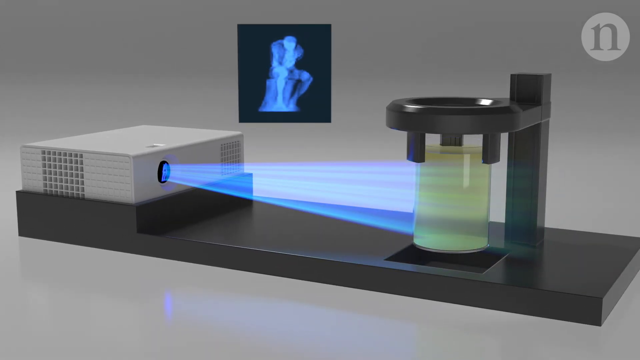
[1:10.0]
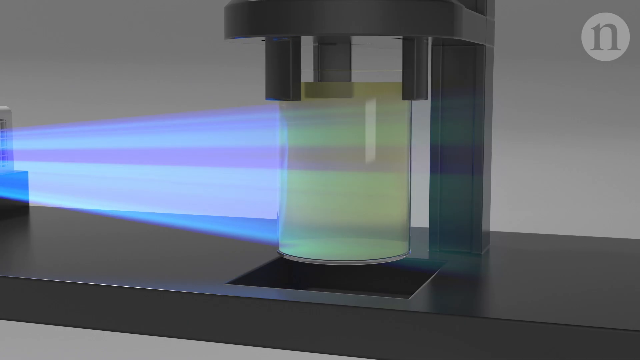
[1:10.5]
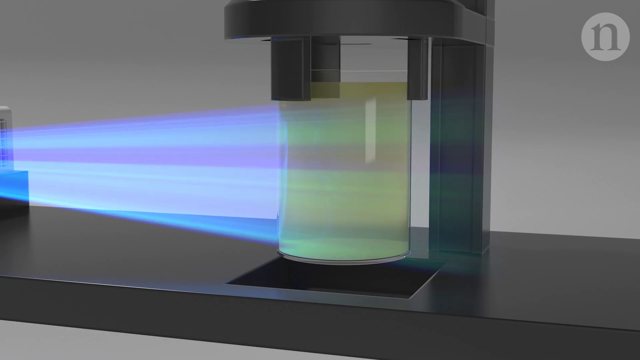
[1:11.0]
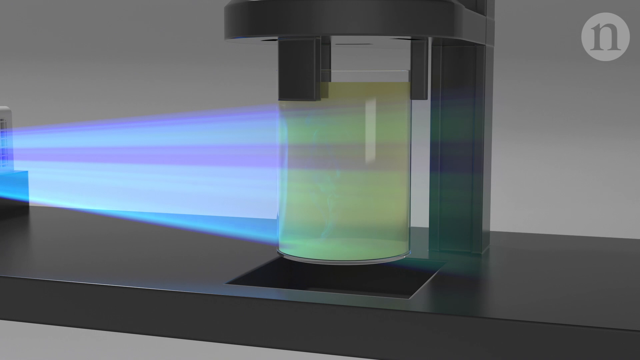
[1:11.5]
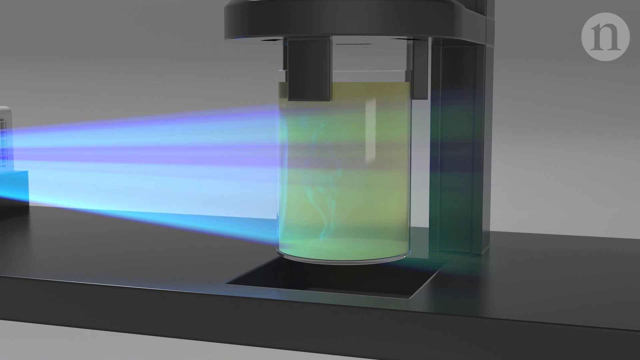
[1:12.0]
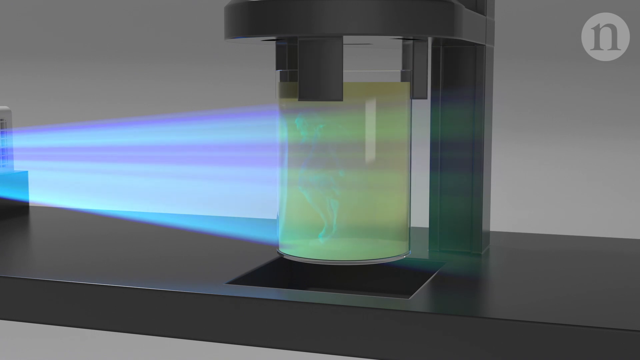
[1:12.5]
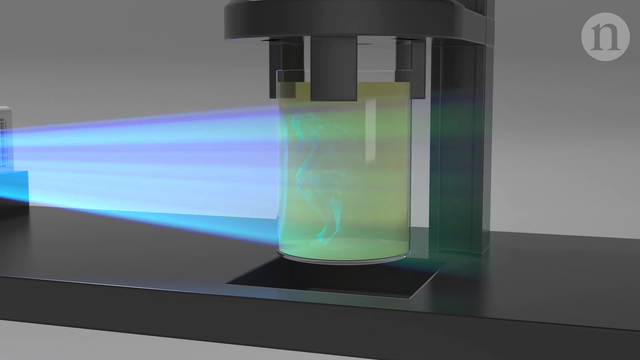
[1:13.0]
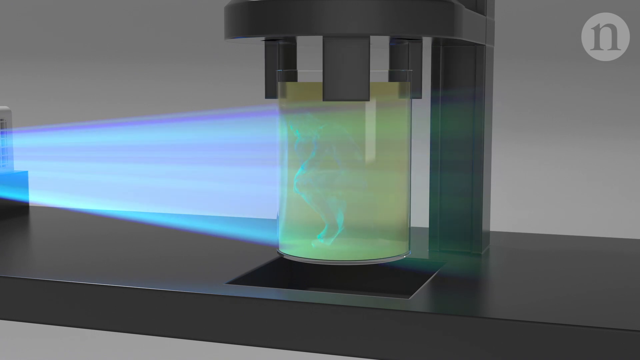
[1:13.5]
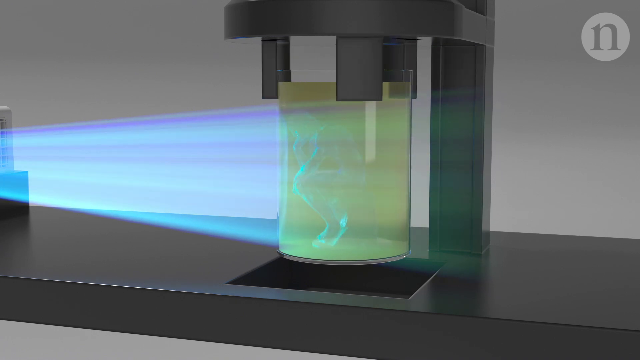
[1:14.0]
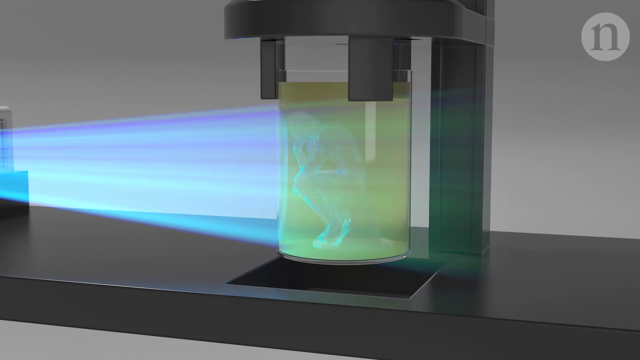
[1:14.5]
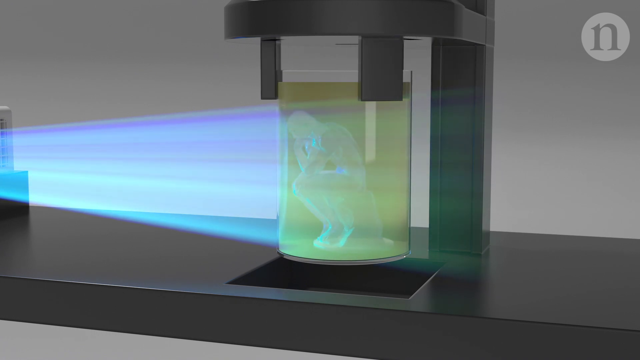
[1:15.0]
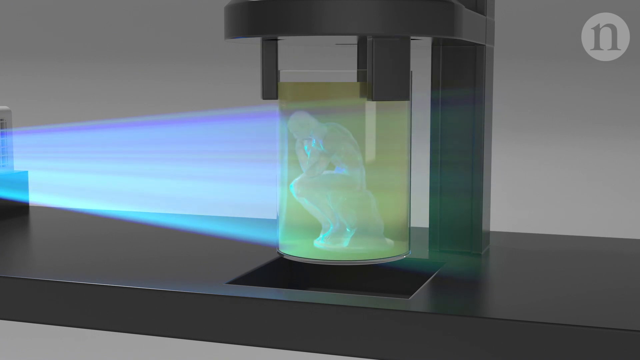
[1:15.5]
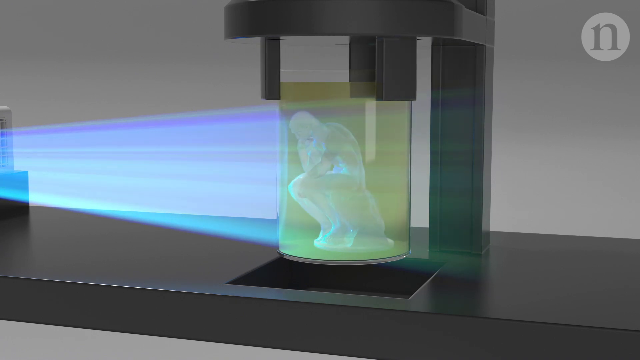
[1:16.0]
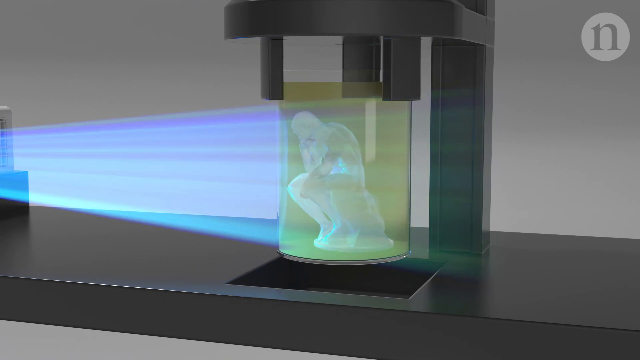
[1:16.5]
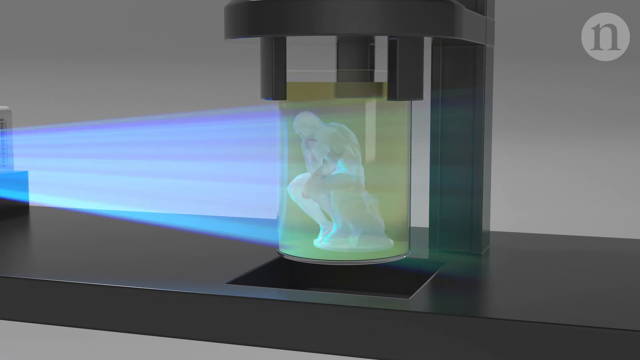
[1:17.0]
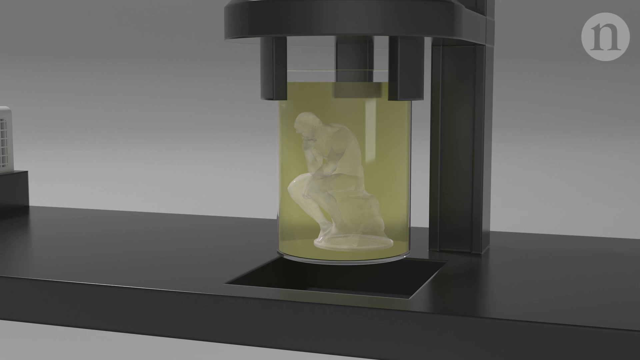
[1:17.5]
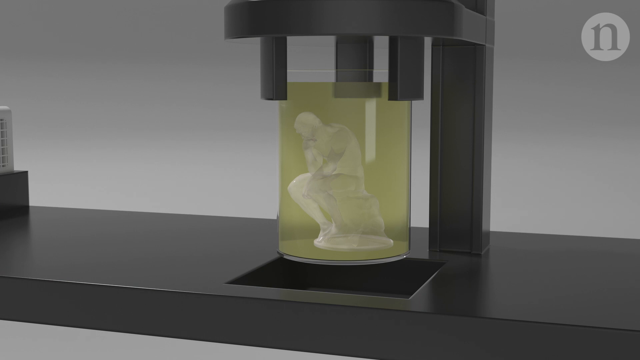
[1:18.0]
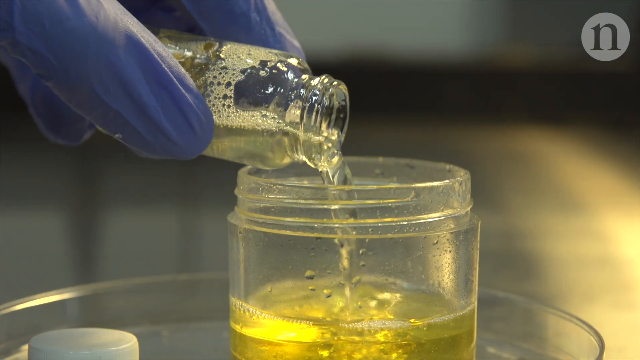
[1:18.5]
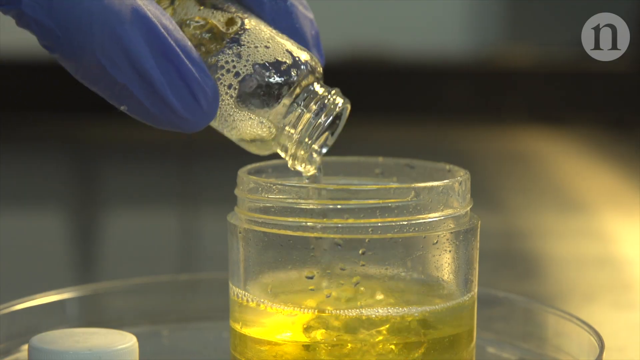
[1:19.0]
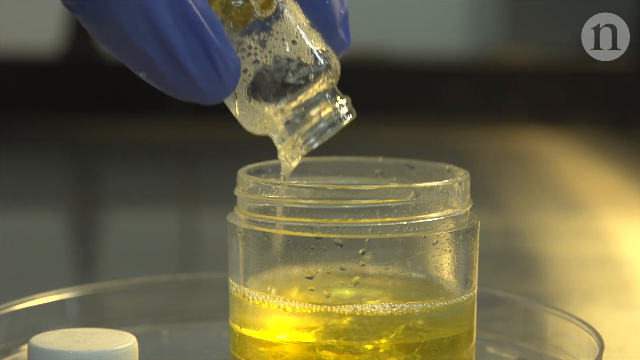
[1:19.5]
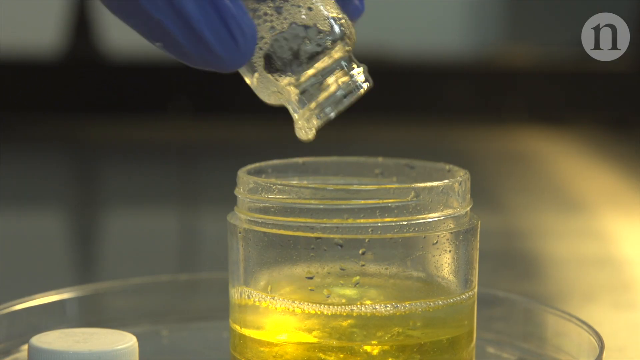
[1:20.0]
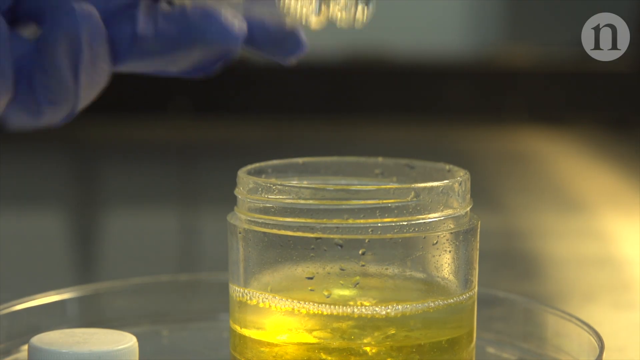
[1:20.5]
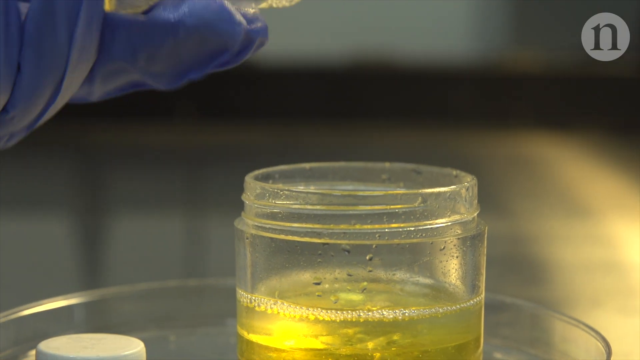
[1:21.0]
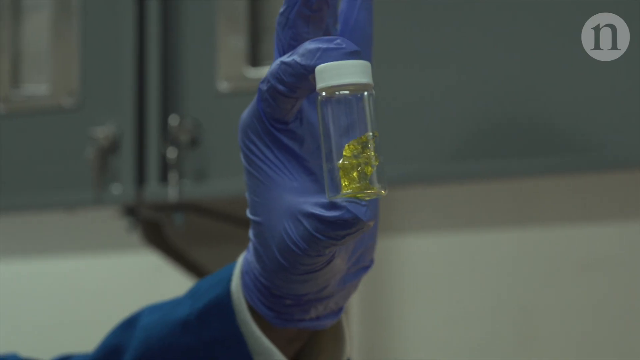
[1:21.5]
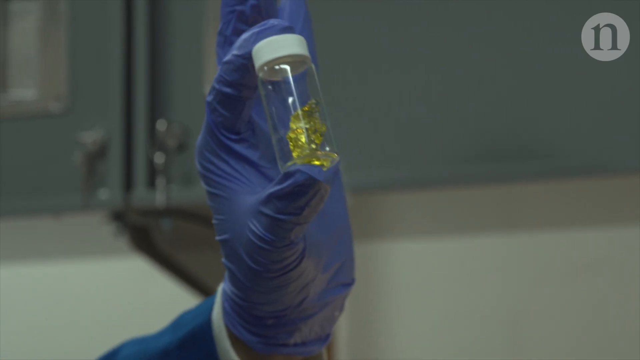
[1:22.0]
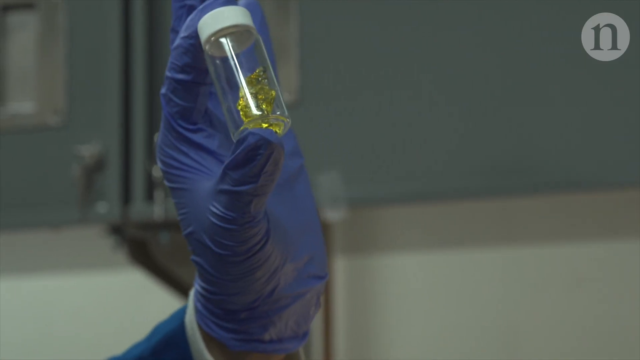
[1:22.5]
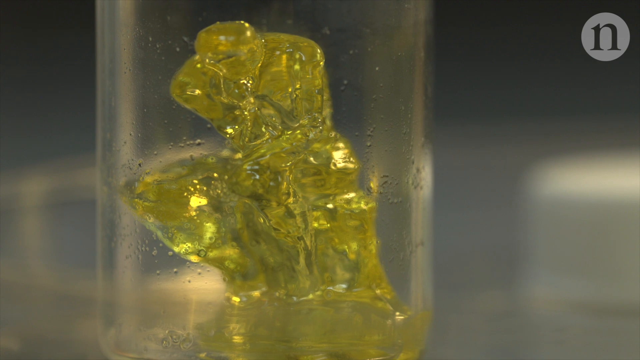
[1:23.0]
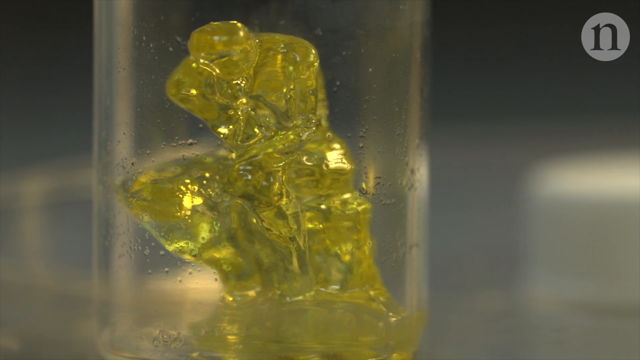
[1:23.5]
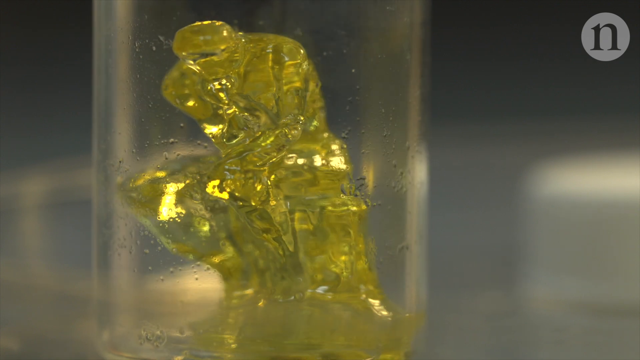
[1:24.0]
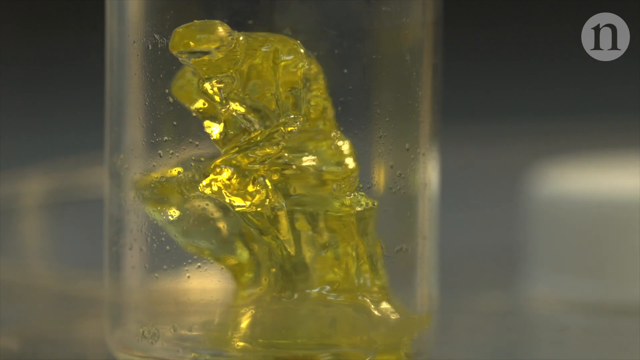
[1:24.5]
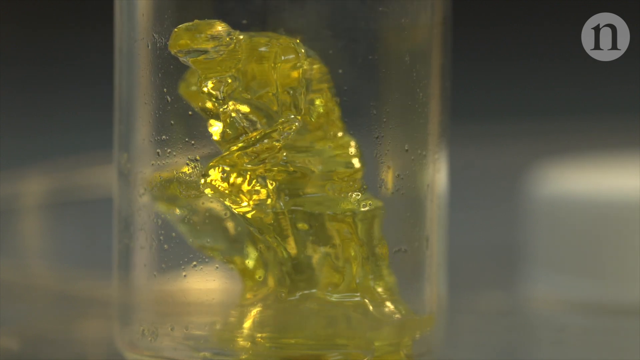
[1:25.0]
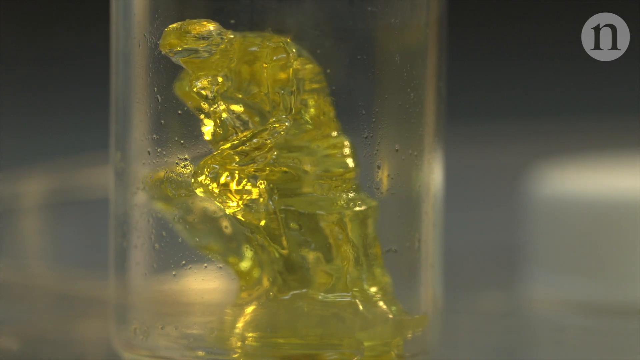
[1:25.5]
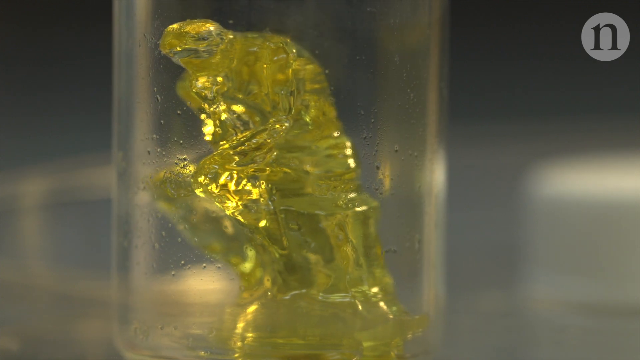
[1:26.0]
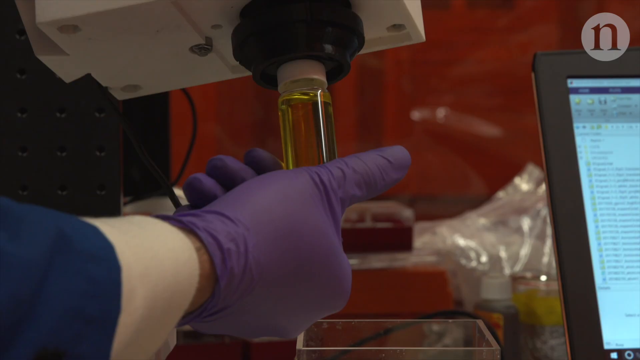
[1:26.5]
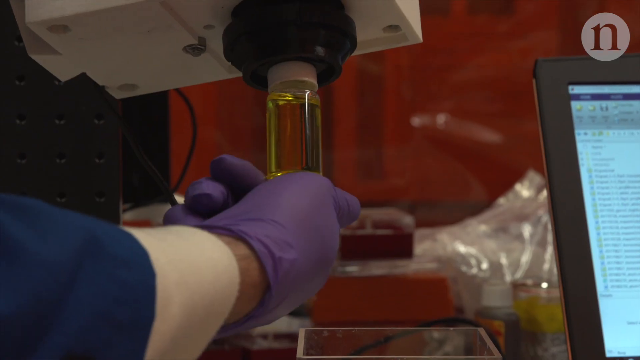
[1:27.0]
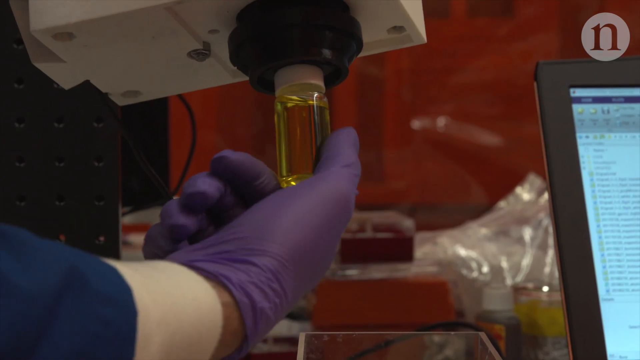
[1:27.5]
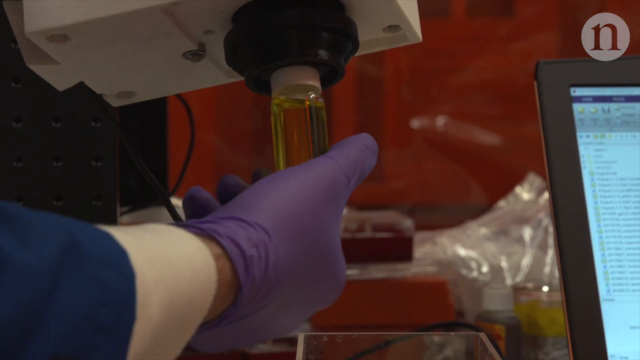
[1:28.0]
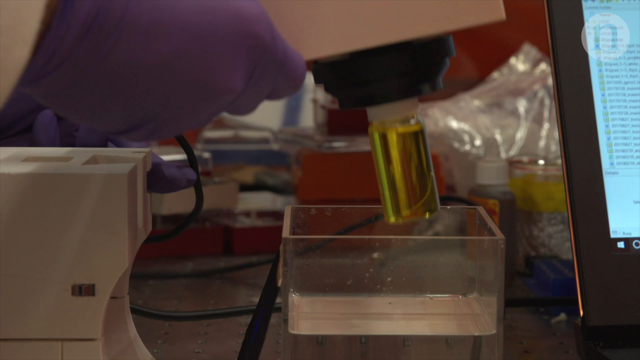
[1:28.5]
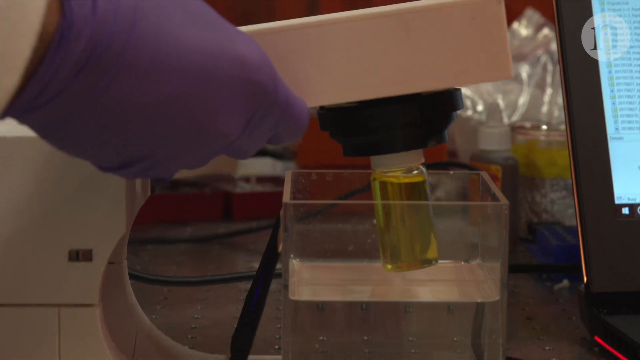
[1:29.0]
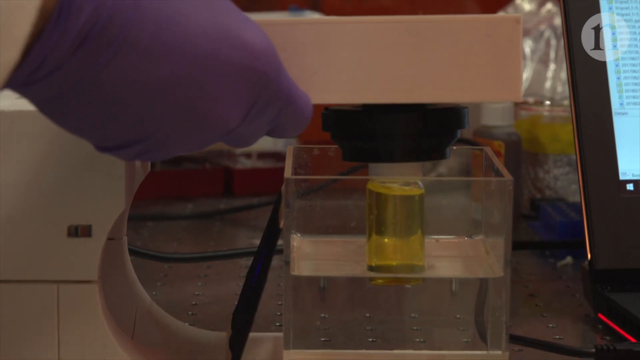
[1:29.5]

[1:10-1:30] A very strong light shines on the bottle, and inside the bottle a shape forms resembling the human body seen earlier. It seems to be some kind of new technology.